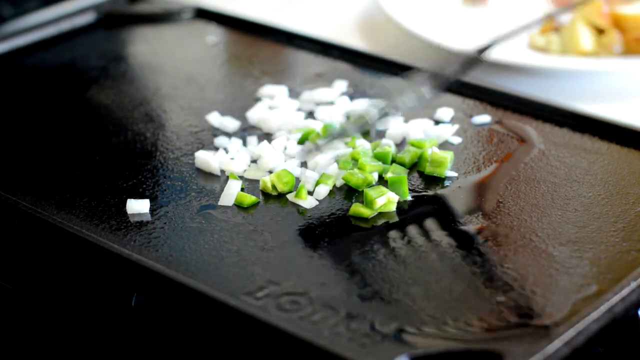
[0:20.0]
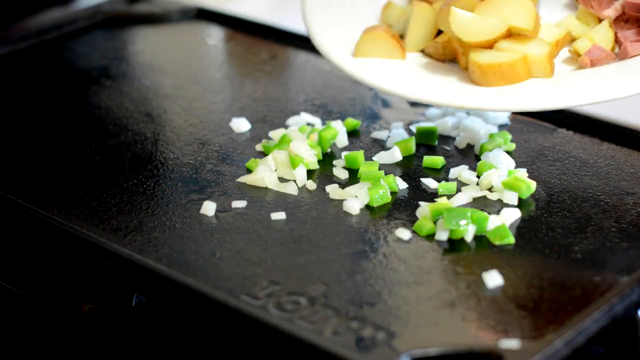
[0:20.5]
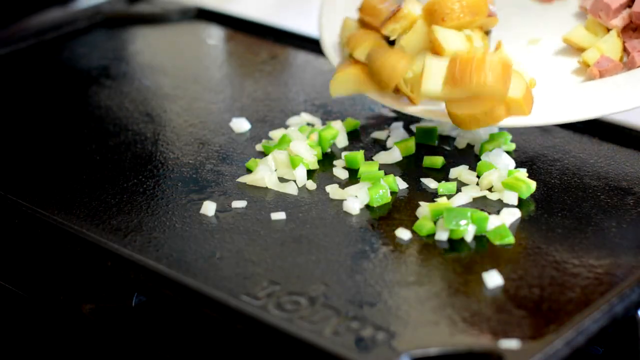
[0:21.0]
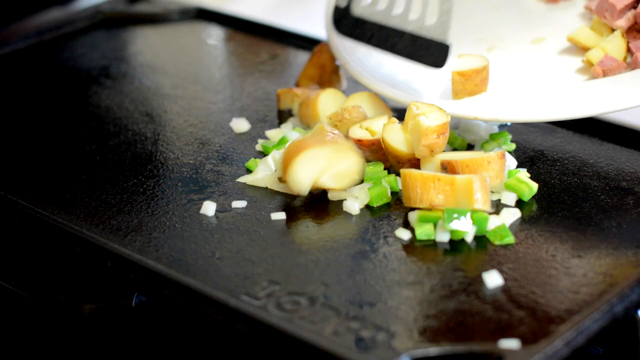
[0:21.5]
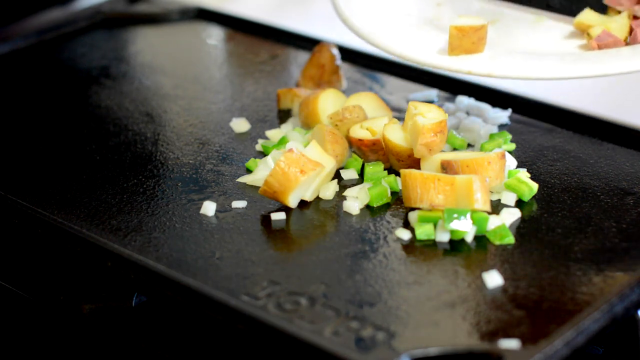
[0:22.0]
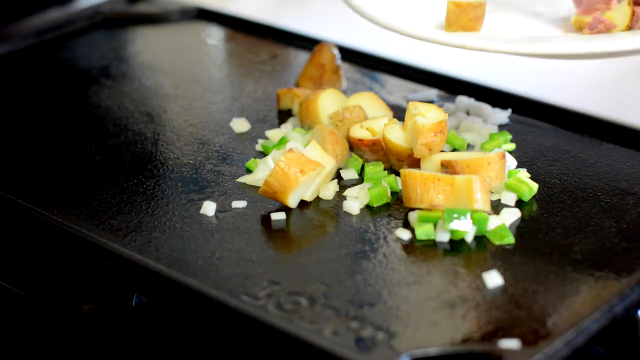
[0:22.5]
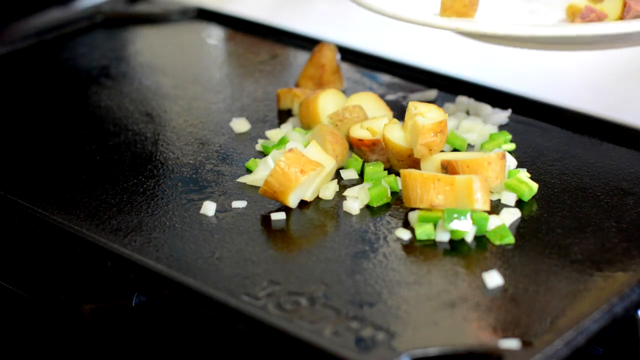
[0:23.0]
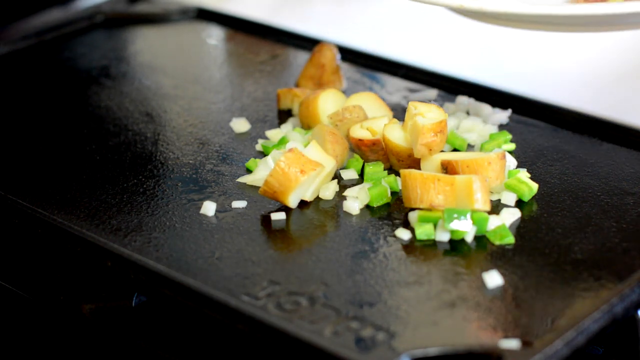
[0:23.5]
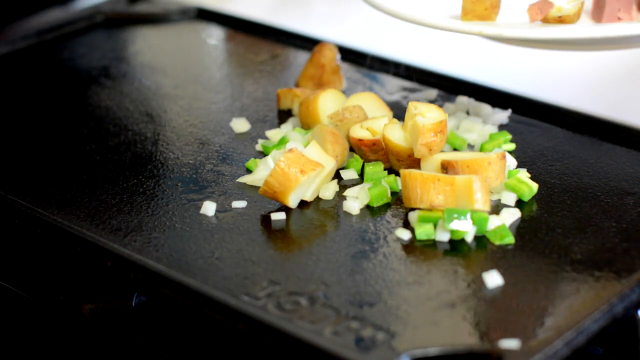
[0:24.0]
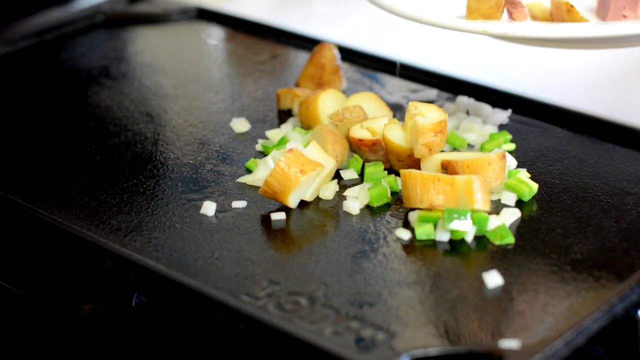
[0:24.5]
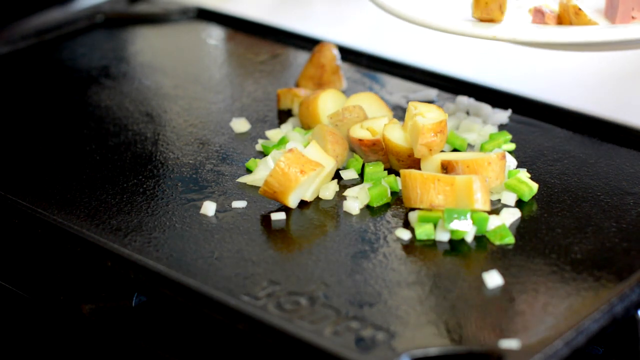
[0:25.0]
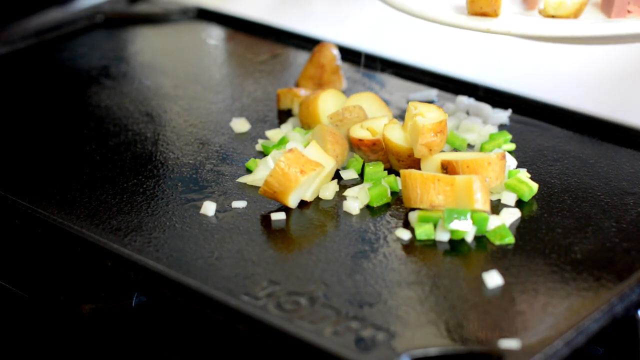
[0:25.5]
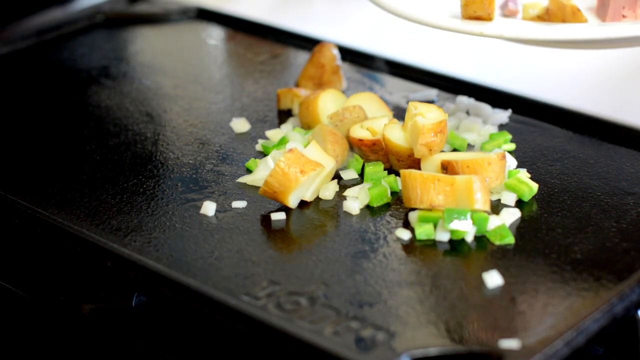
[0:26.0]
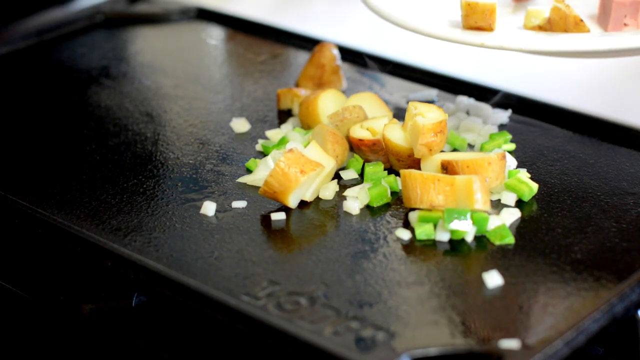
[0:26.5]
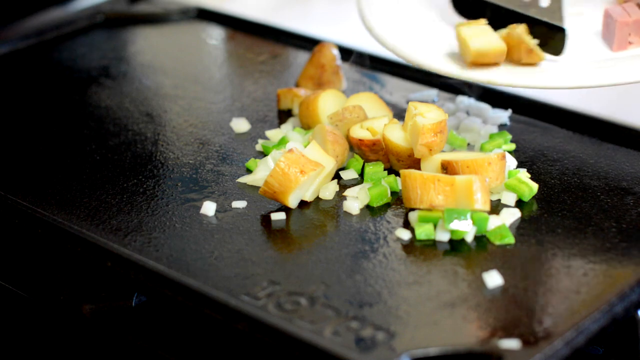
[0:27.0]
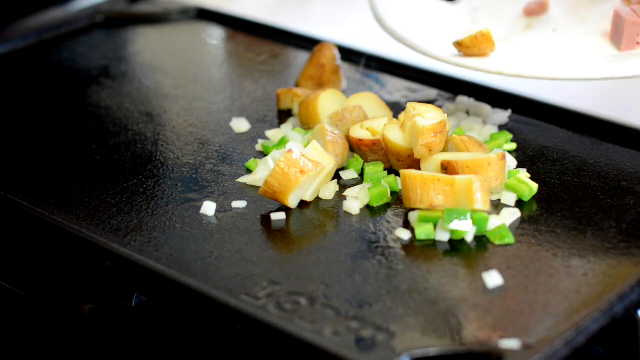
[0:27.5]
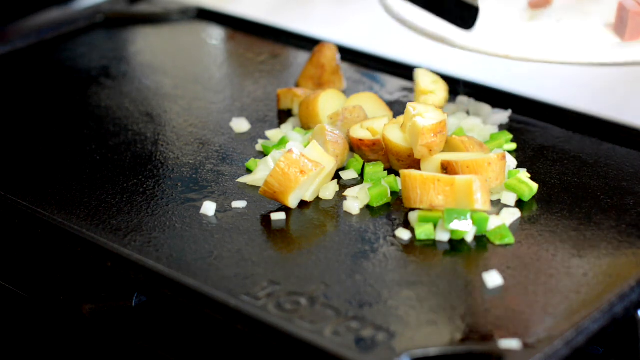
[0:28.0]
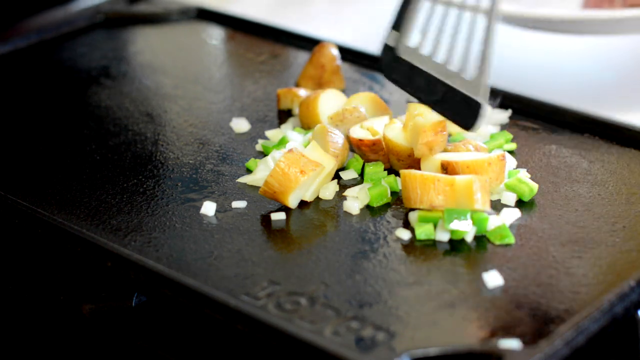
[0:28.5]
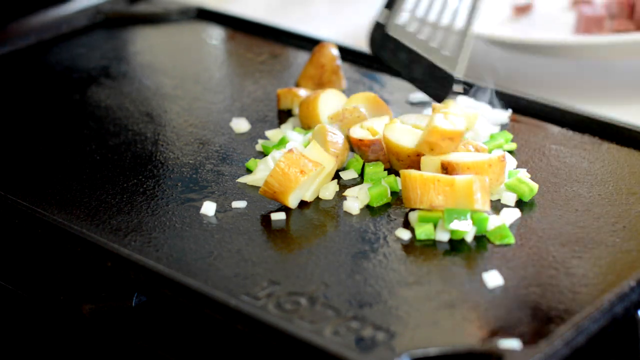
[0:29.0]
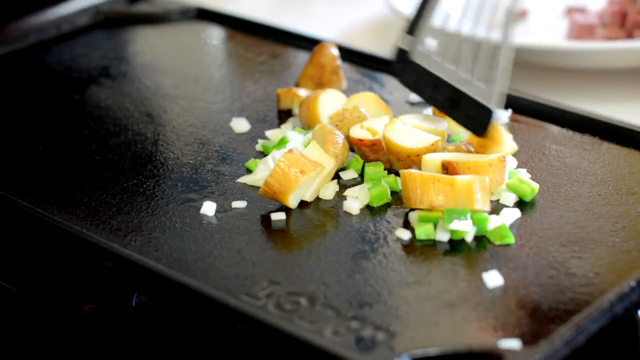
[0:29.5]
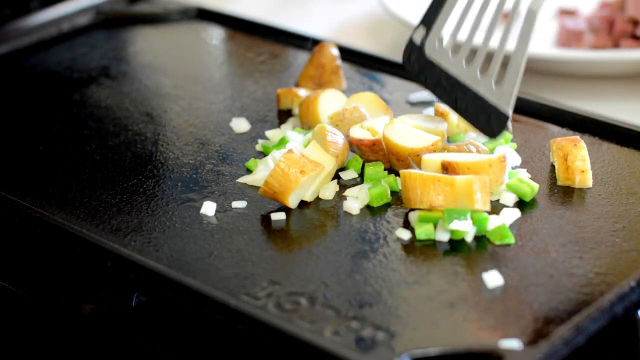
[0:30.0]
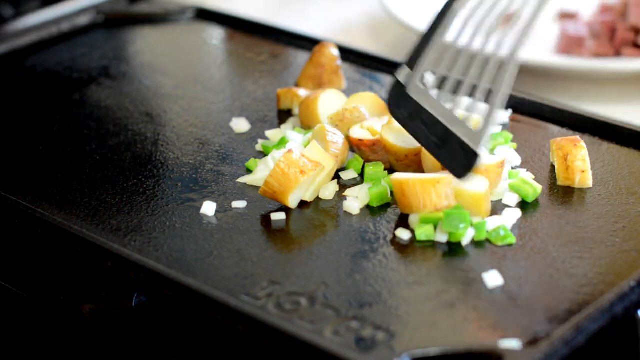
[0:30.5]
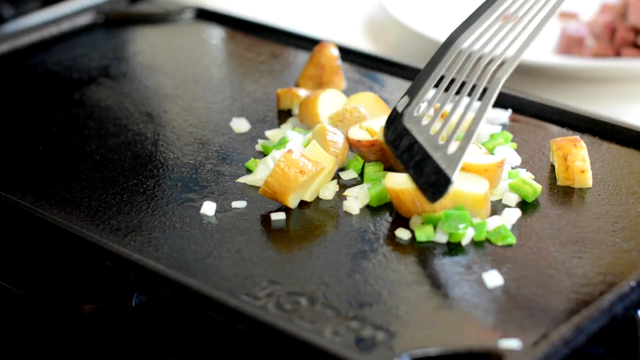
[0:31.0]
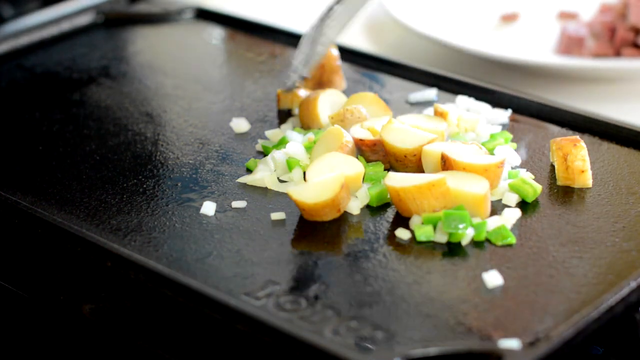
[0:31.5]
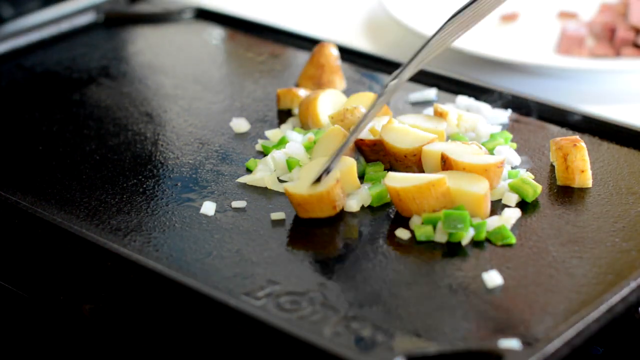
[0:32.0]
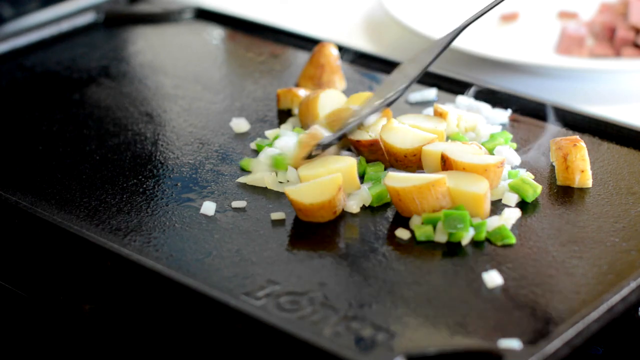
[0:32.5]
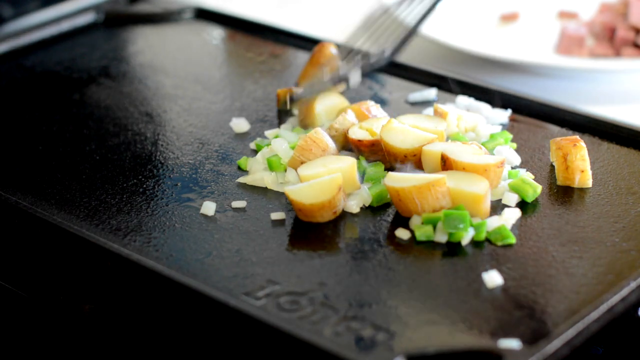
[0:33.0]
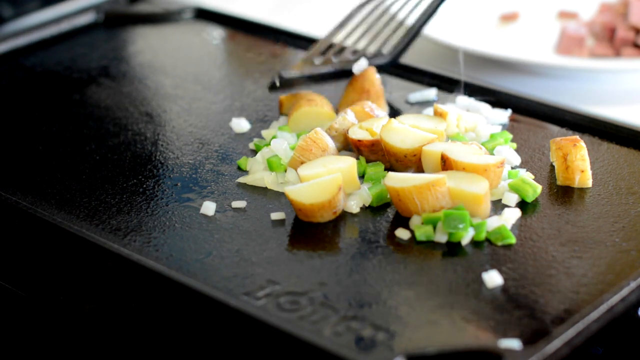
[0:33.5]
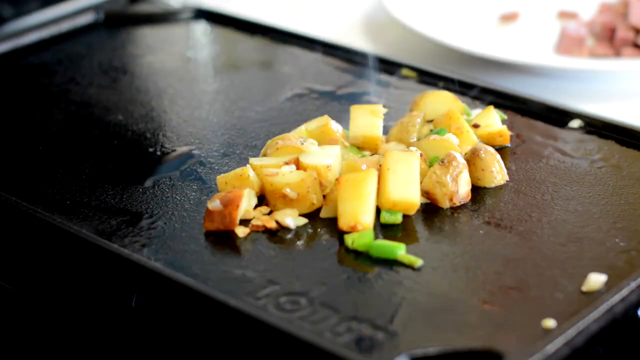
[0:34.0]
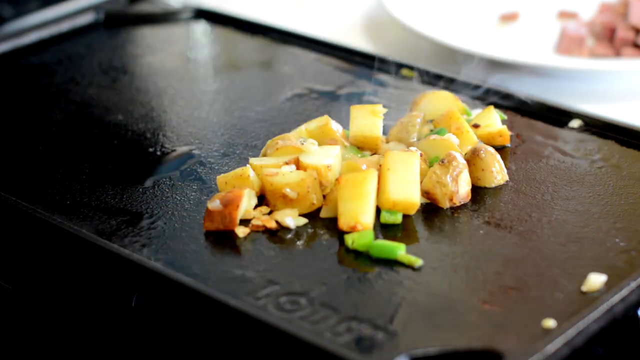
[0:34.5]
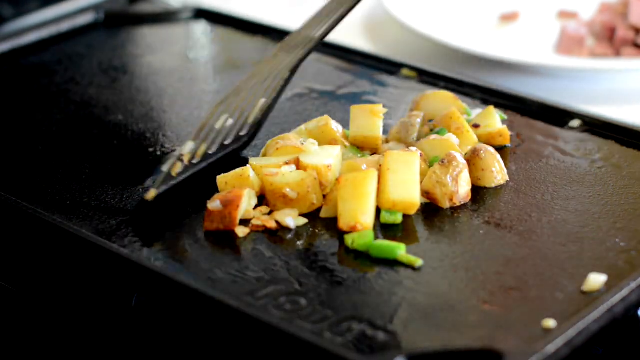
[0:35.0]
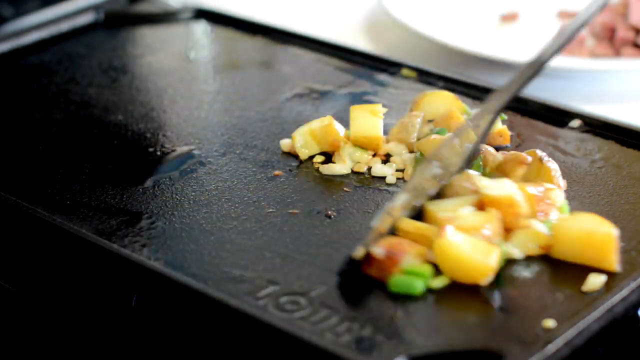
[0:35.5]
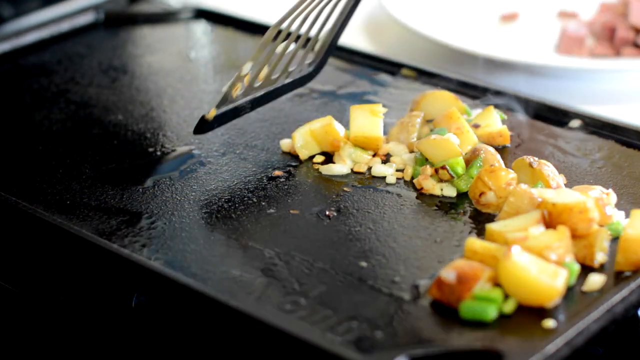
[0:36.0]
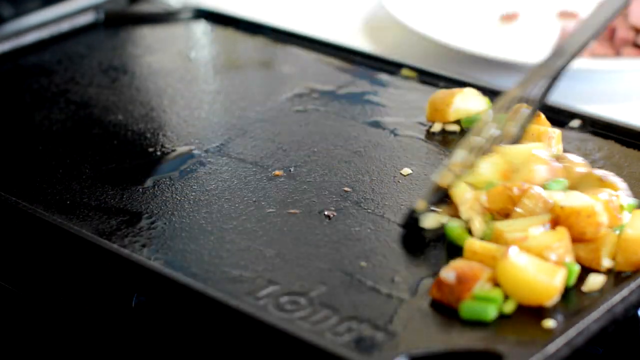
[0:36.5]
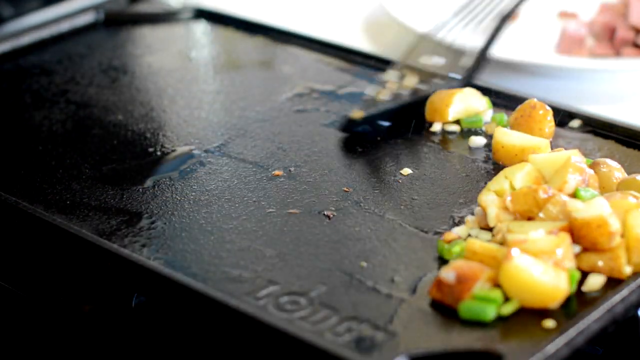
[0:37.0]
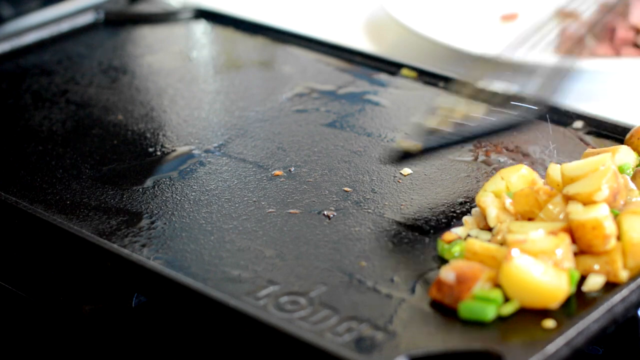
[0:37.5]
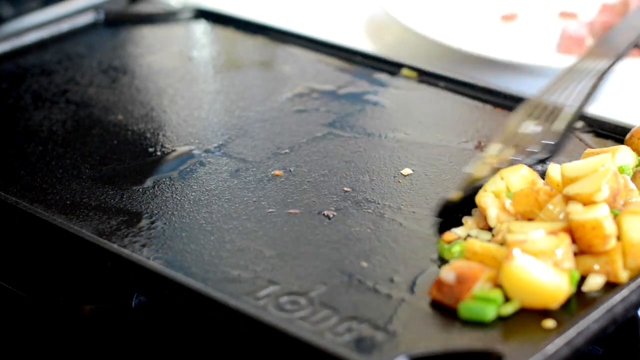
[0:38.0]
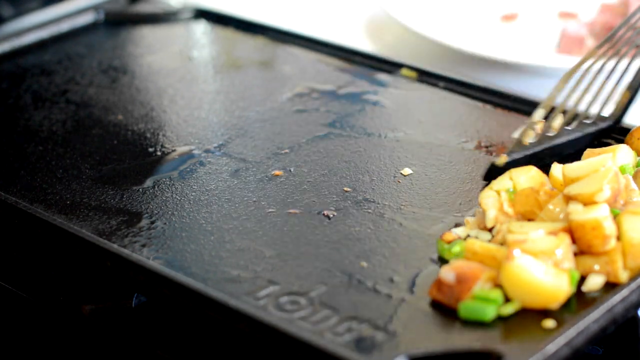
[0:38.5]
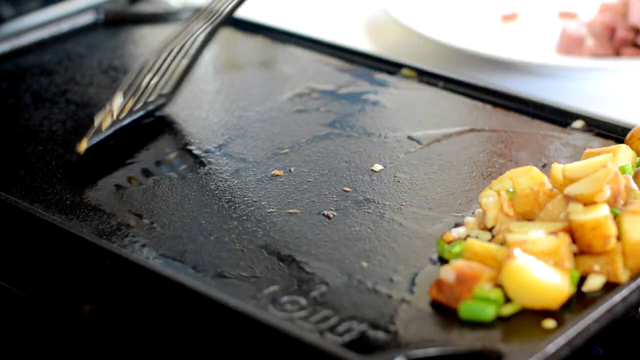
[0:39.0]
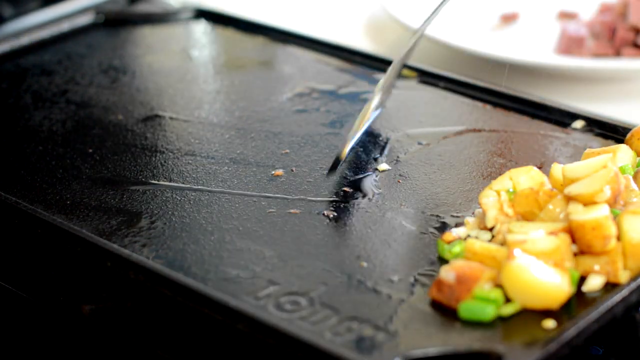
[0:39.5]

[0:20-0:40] Vegetables are cooking on top of a flat black grill and are being pushed around by a spatula. The scene changes to a white plate hovering over the grill with what appear to be cut-up potatoes, and the spatula pushes the potatoes from the plate onto the grill, where they begin to cook. It pushes more potatoes onto the grill, the plate is put down in front of the grill, and the spatula moves the potatoes back and forth and around. The video then fast-forwards to the potatoes fully cooked on the grill, with smoke coming off them. The spatula pulls the potatoes and vegetables over to the side of the grill nearest the camera, leaving some oil visible in the center of the grill, then goes back to the center and pulls the remaining leftover food to the edge of the grill.